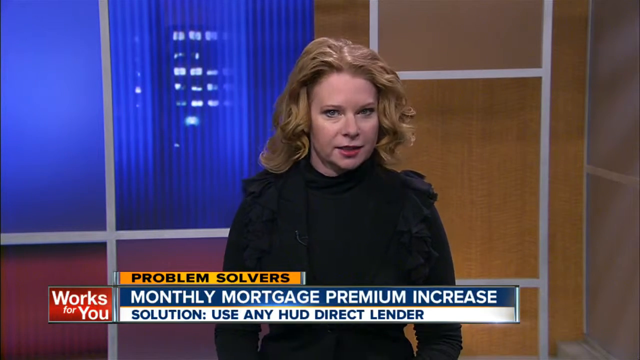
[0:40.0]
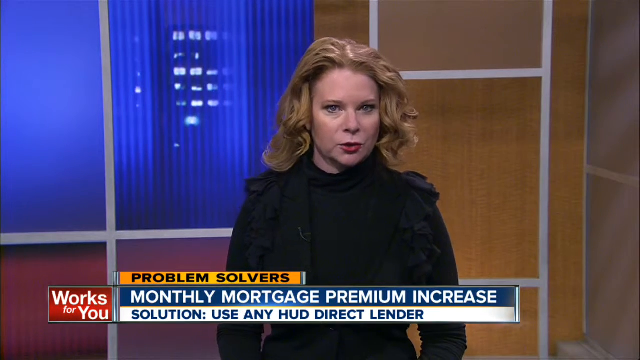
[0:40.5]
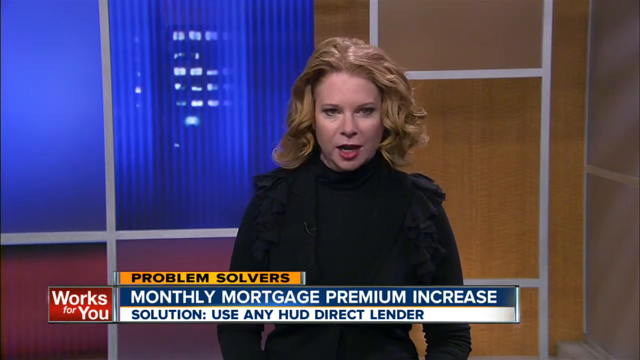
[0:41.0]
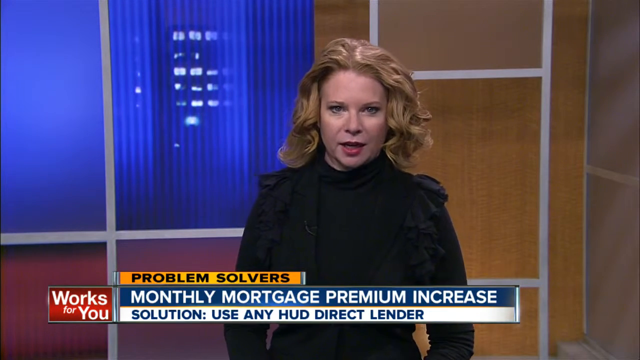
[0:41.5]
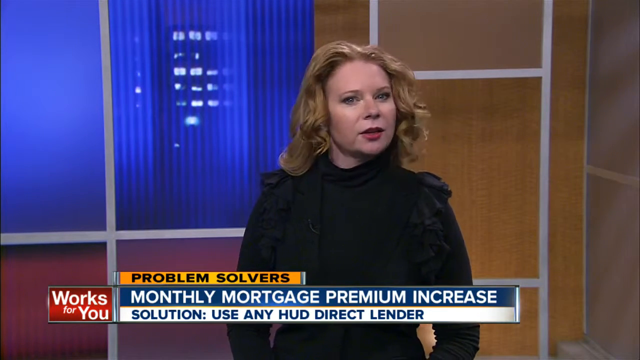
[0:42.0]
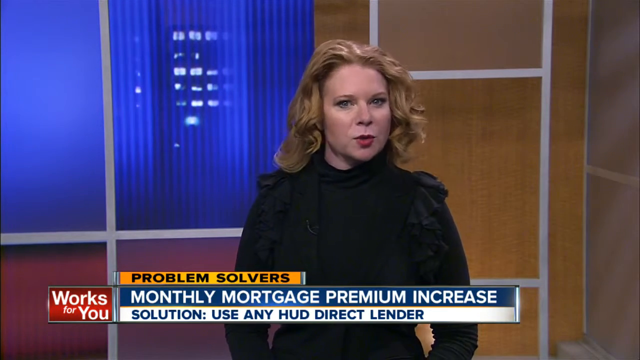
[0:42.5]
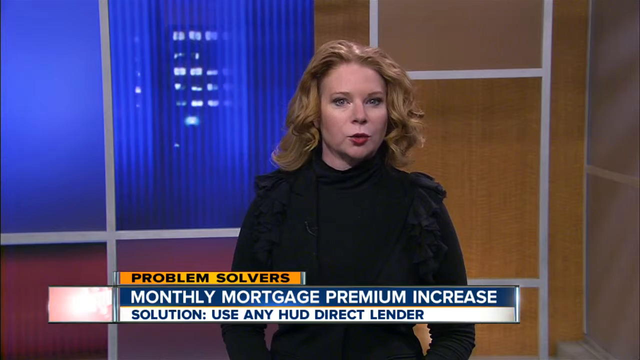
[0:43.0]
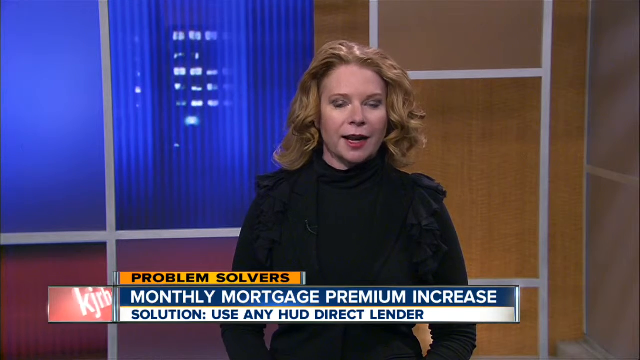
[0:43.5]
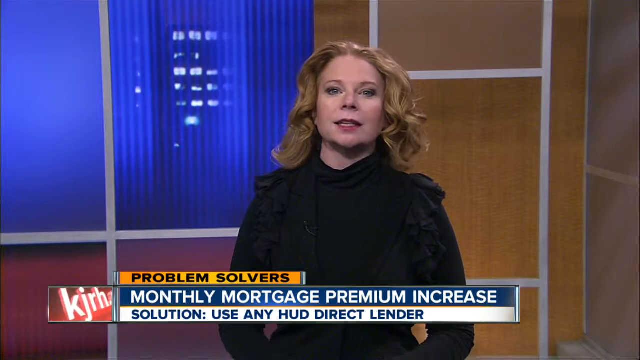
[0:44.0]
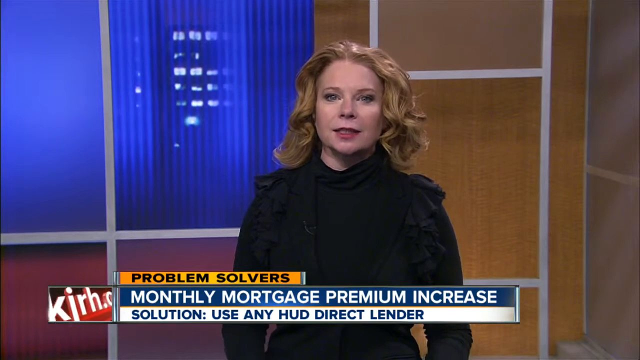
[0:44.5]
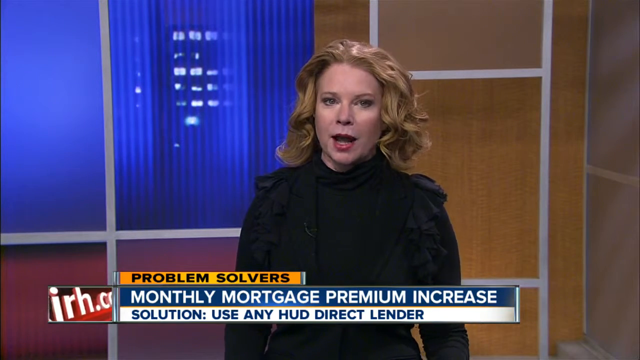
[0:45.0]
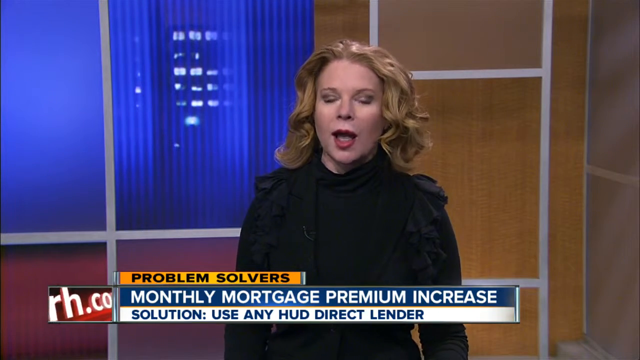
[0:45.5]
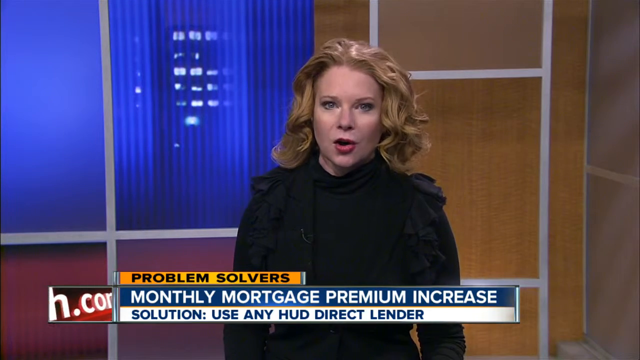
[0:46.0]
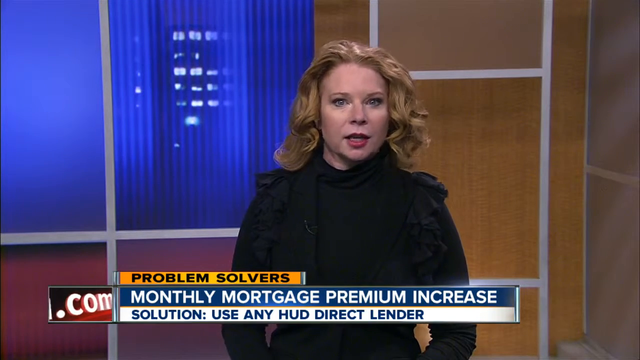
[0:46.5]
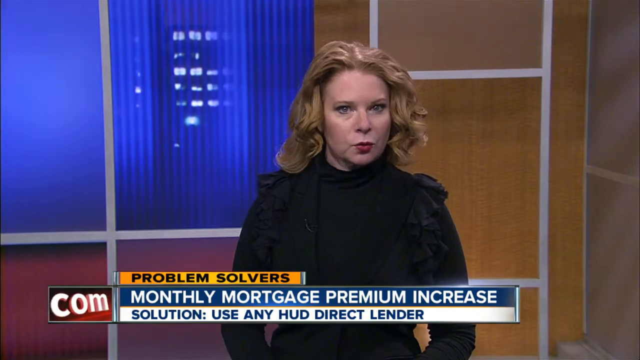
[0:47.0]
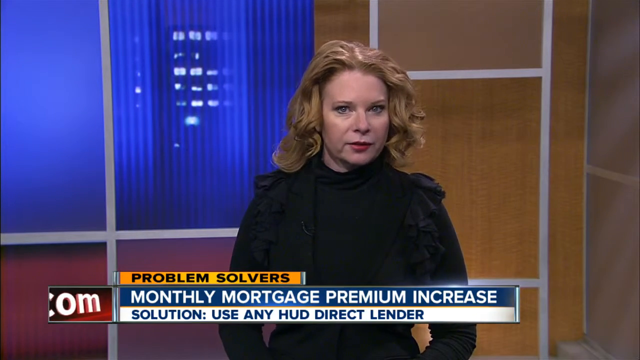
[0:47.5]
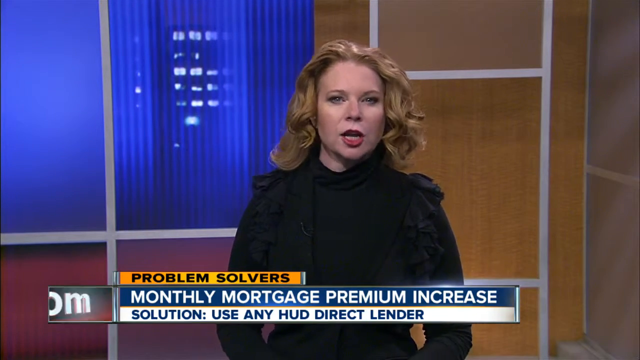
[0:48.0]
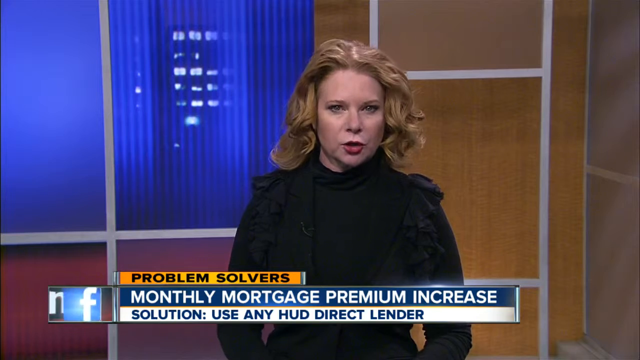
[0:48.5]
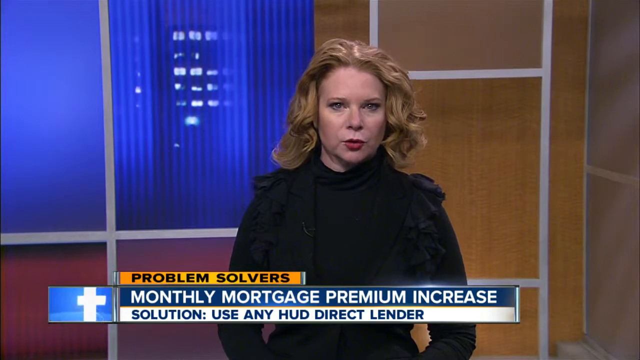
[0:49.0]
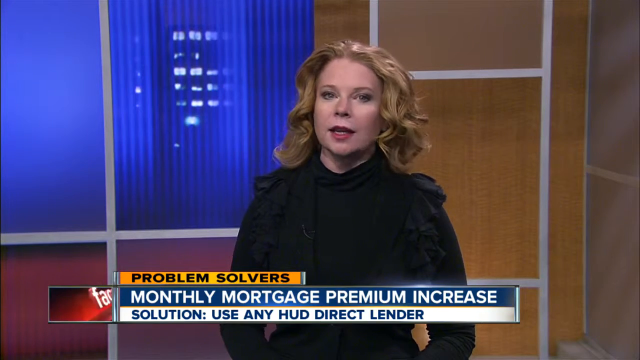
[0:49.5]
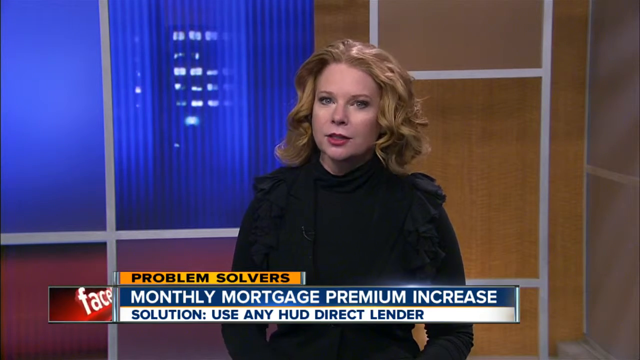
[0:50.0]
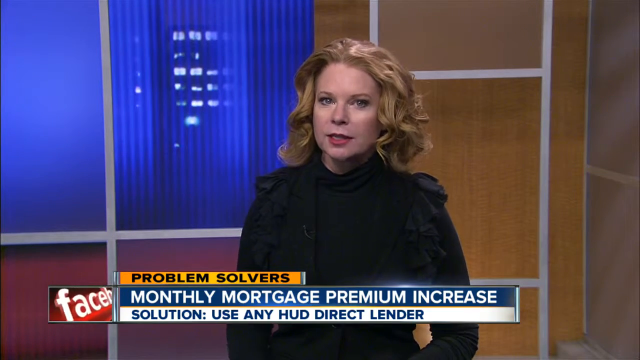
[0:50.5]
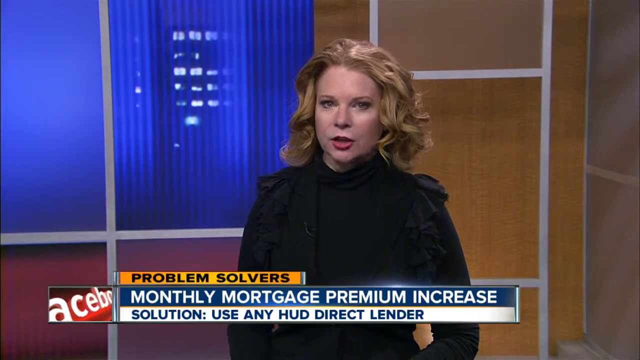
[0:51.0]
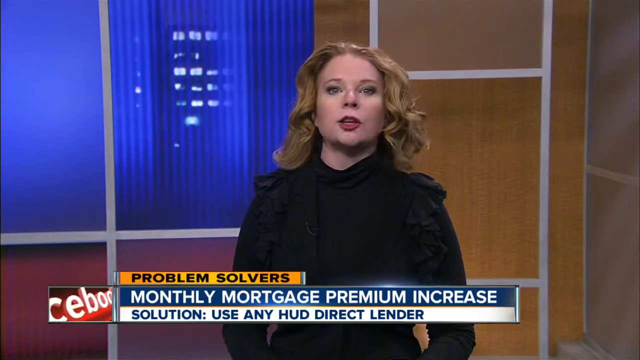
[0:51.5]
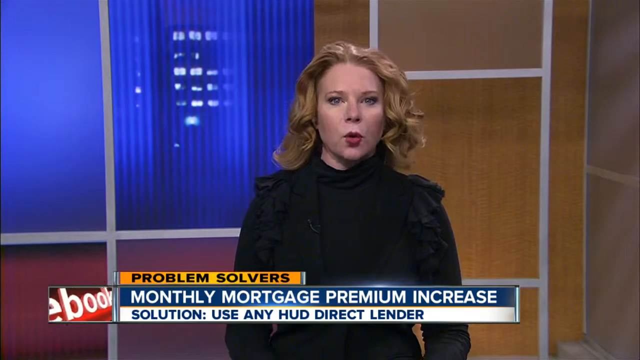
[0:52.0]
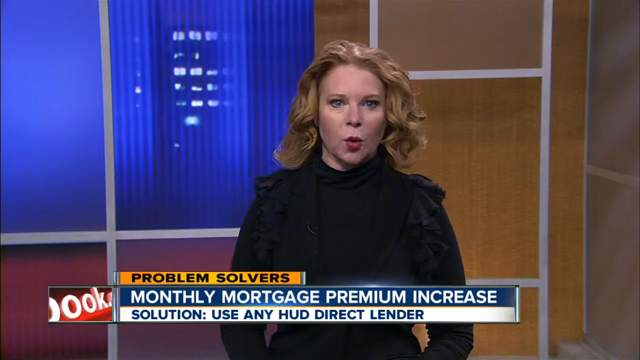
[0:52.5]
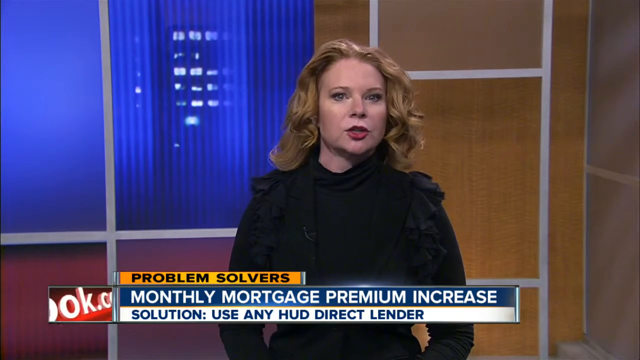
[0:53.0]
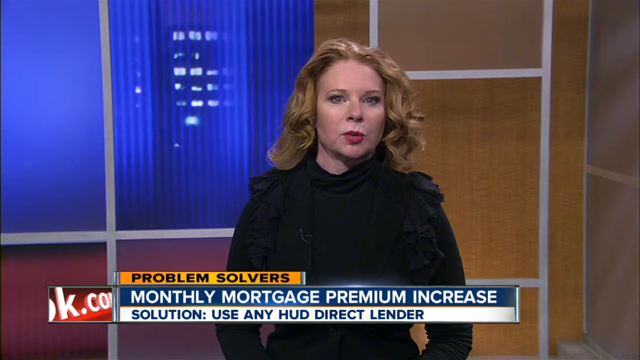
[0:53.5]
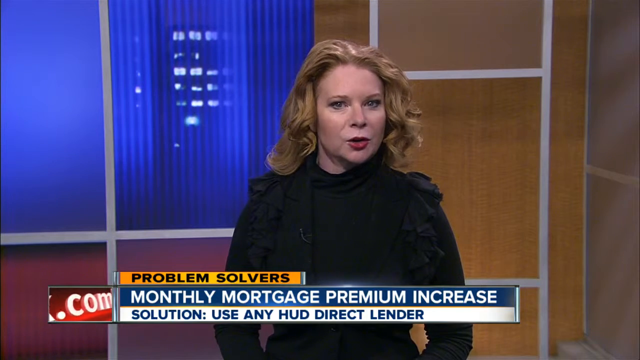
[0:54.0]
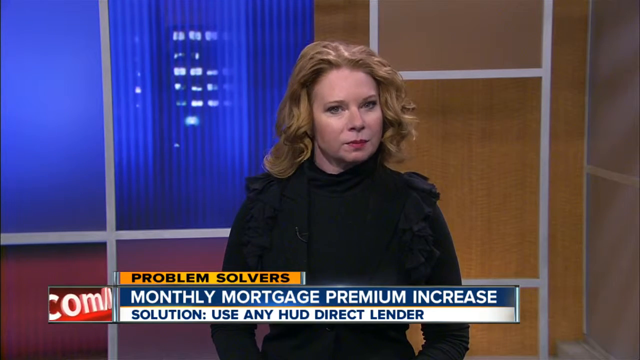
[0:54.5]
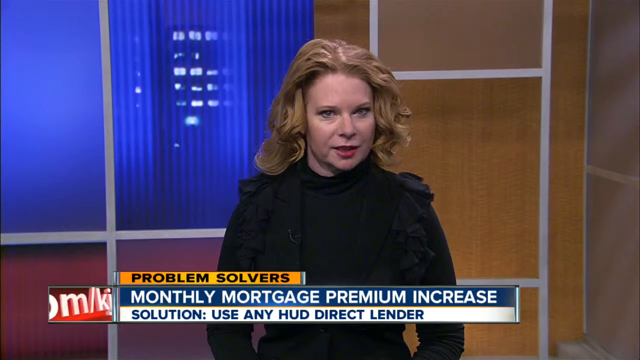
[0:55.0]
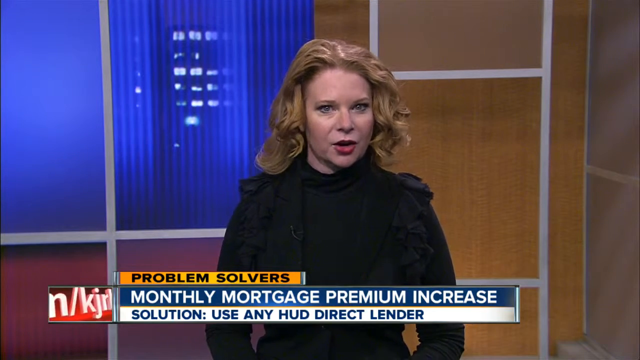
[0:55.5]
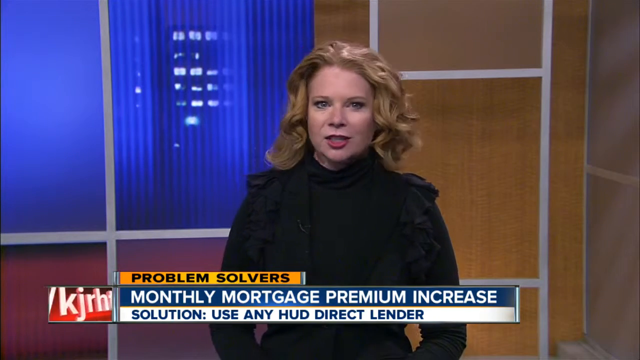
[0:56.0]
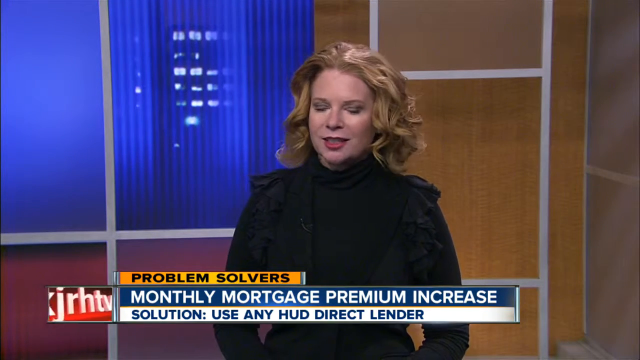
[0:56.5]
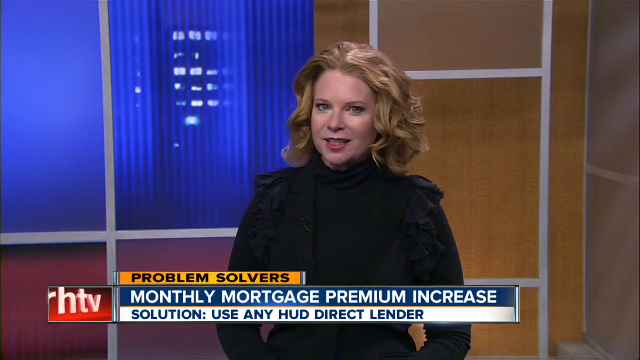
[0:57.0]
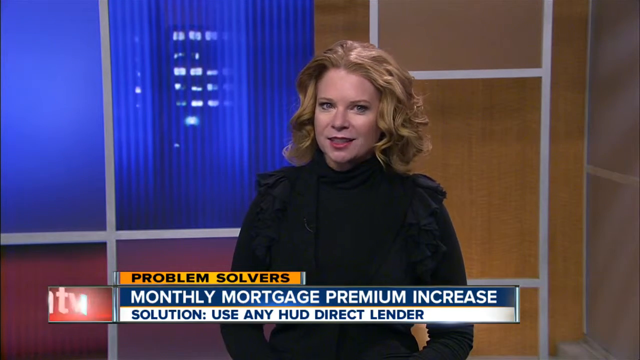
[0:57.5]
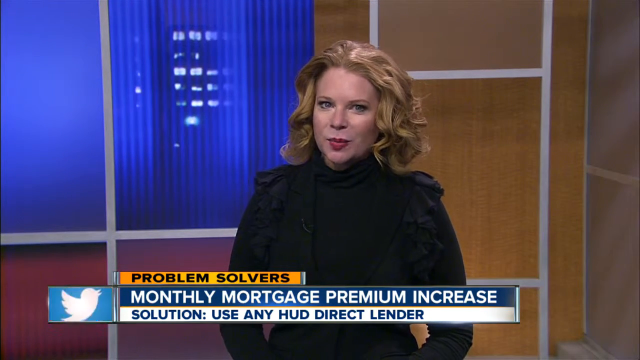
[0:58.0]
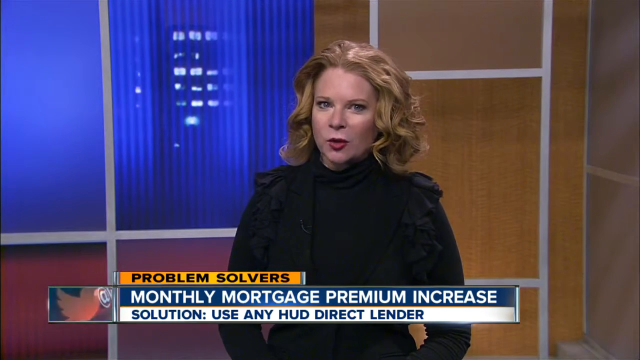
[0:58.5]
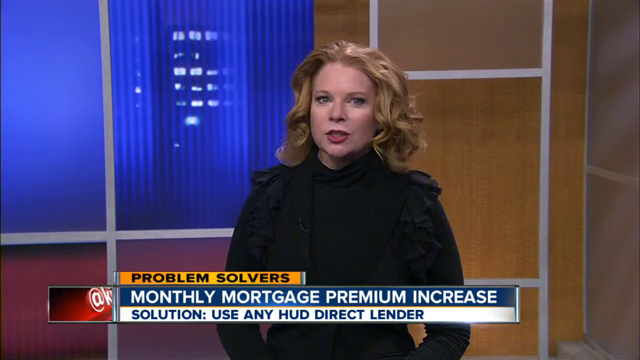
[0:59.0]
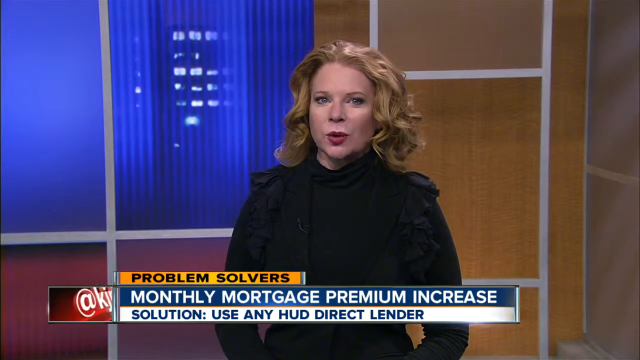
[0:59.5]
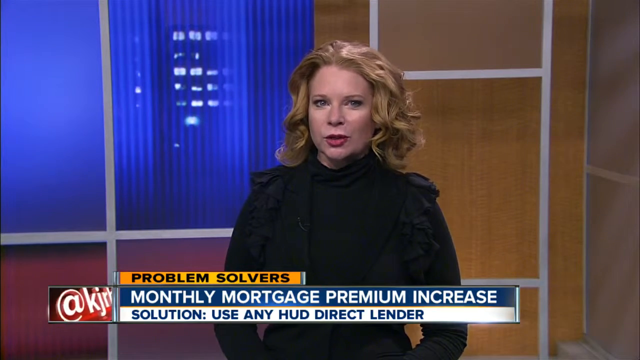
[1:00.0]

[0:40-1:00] The news broadcast is about a monthly mortgage premium increase, and underneath that the channel gives a solution: use any HUD Direct Lender. A woman anchor with strawberry blonde hair wears a black blouse, with a blue backdrop and a tan wall behind her. She keeps her eyes on the camera, never breaking eye contact, and occasionally nods her head.